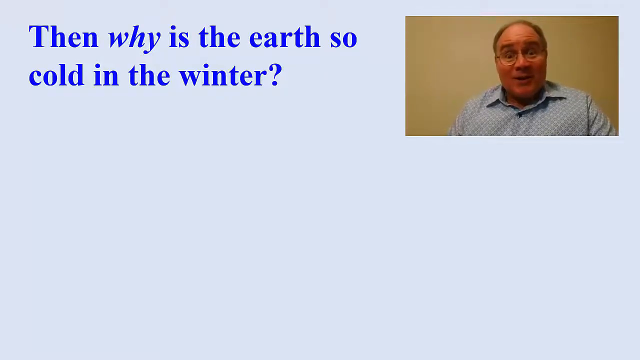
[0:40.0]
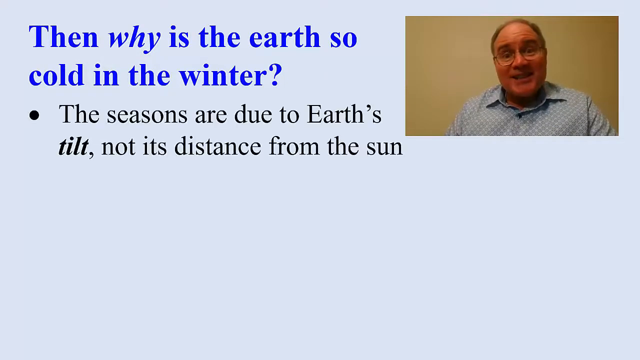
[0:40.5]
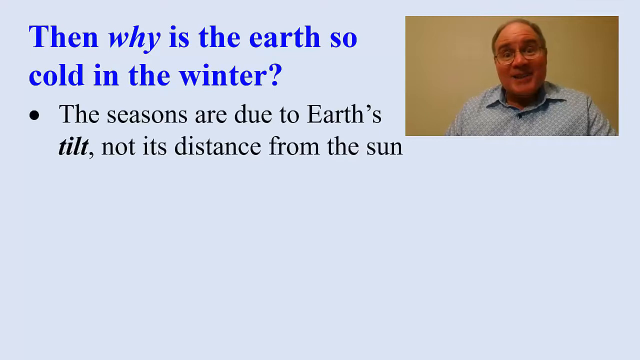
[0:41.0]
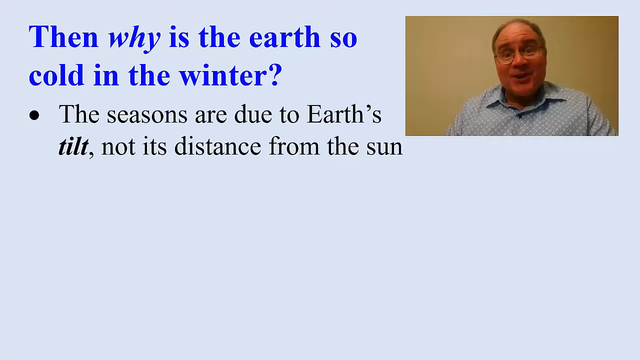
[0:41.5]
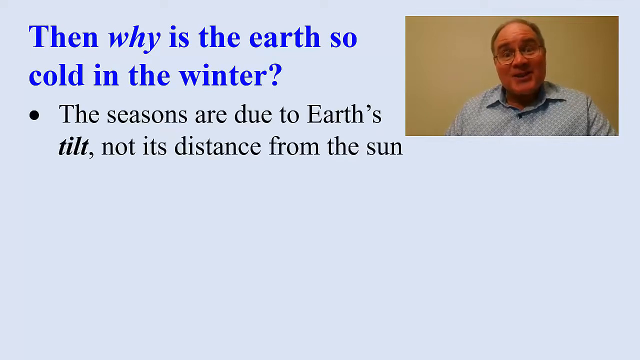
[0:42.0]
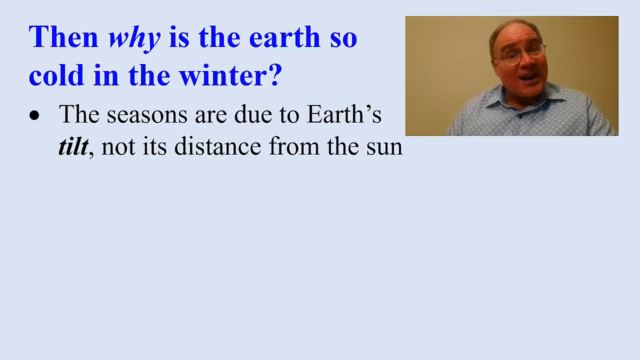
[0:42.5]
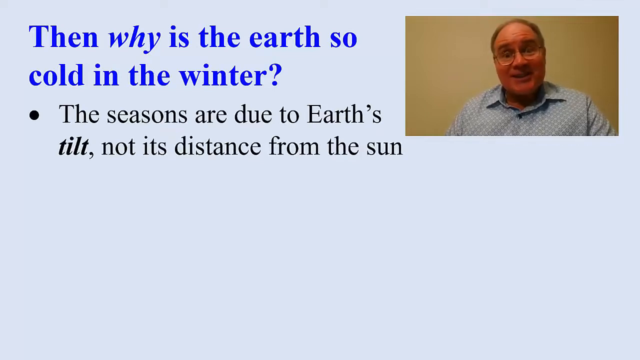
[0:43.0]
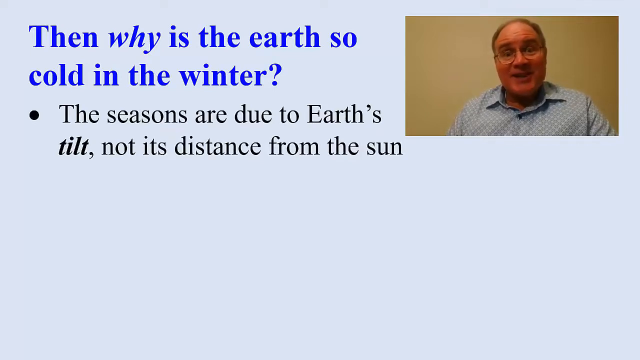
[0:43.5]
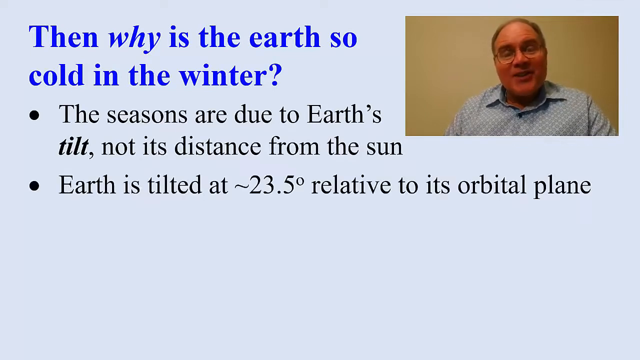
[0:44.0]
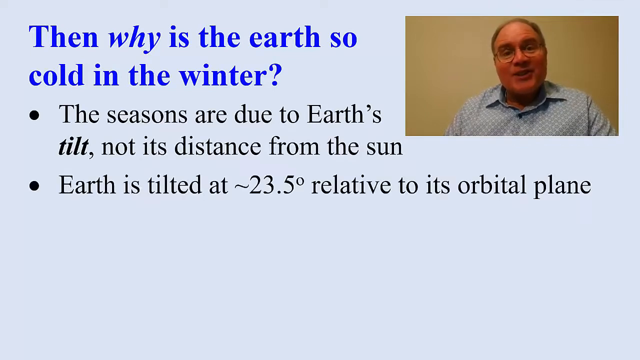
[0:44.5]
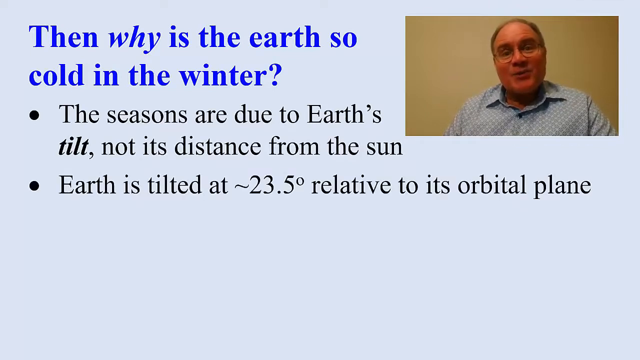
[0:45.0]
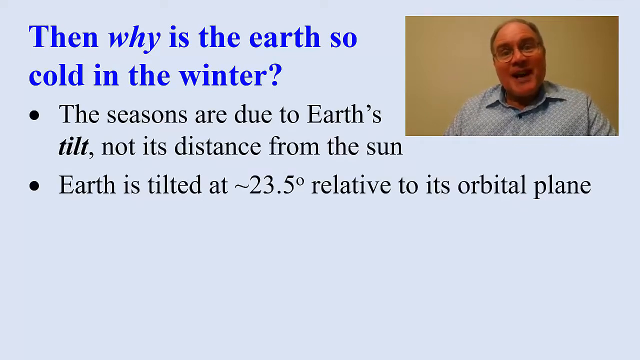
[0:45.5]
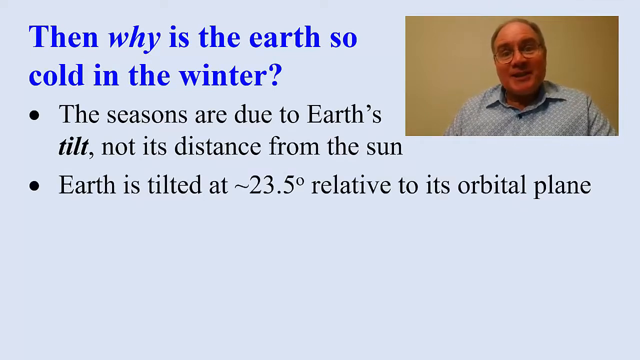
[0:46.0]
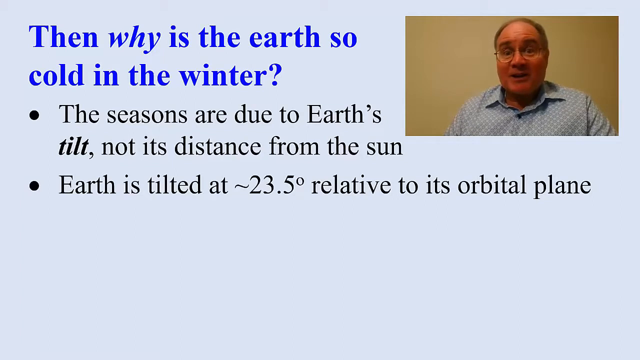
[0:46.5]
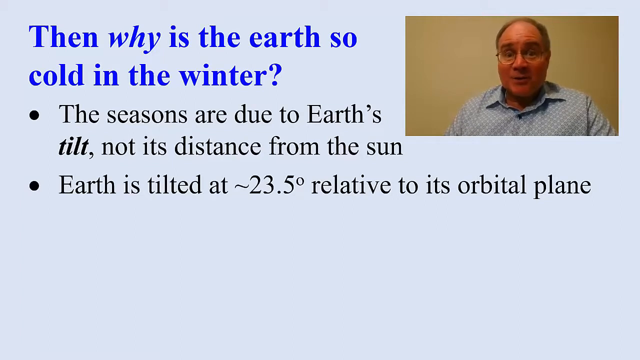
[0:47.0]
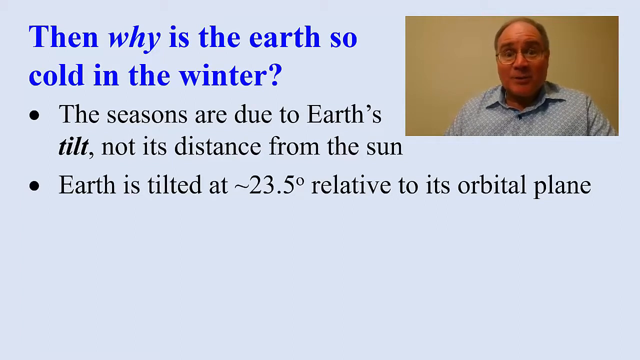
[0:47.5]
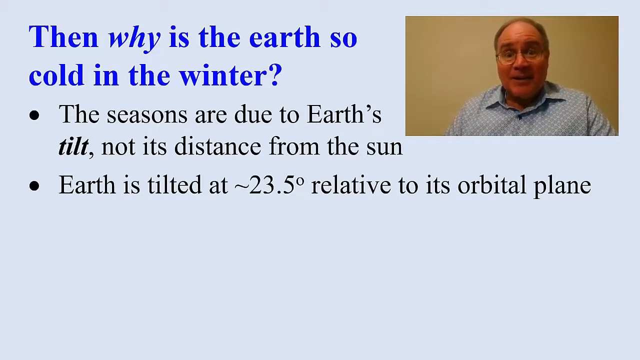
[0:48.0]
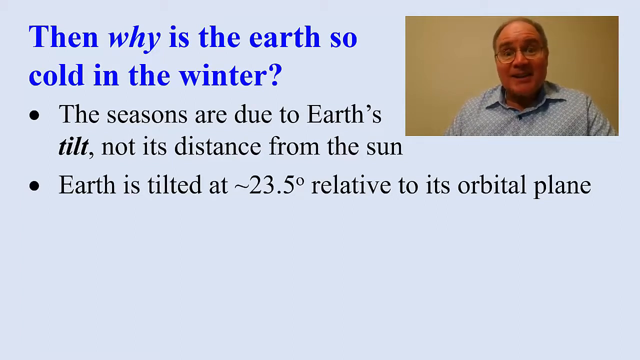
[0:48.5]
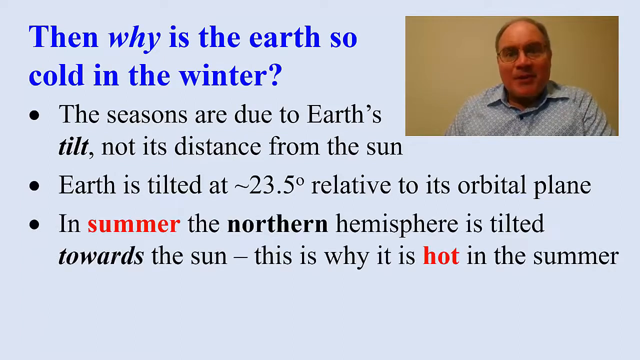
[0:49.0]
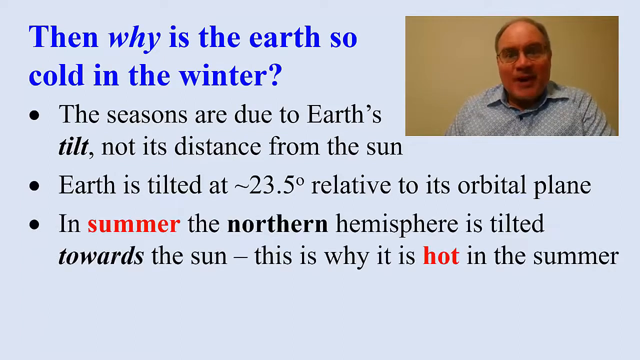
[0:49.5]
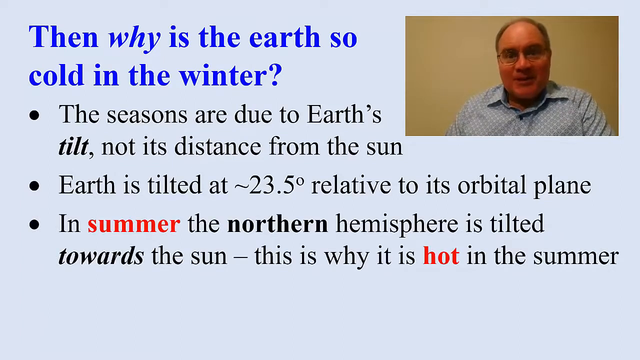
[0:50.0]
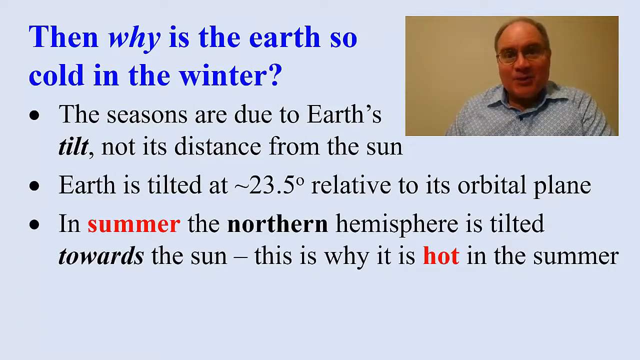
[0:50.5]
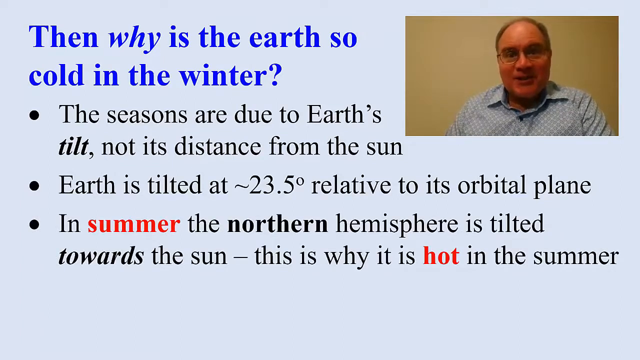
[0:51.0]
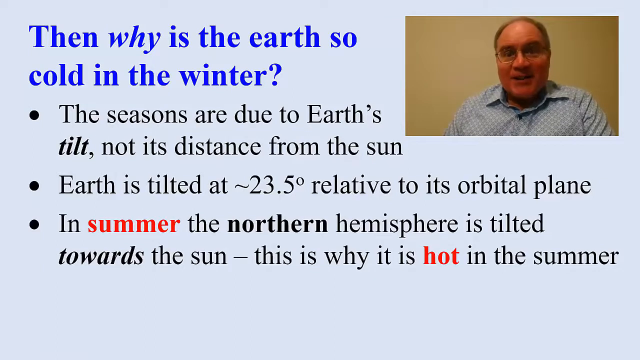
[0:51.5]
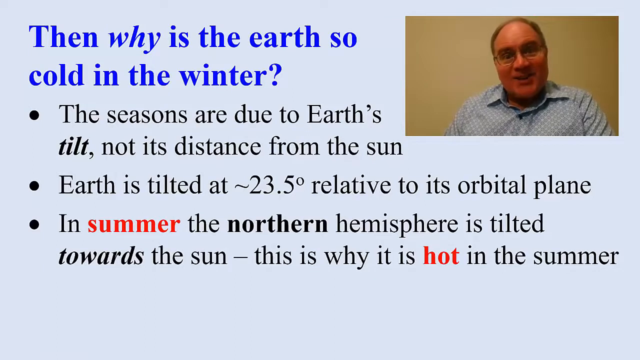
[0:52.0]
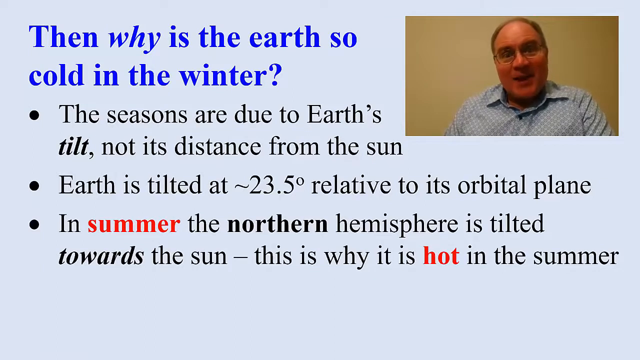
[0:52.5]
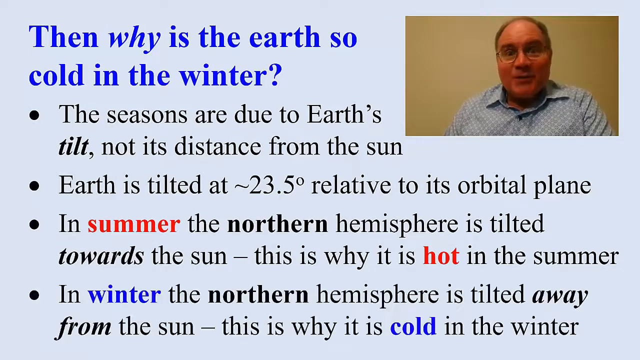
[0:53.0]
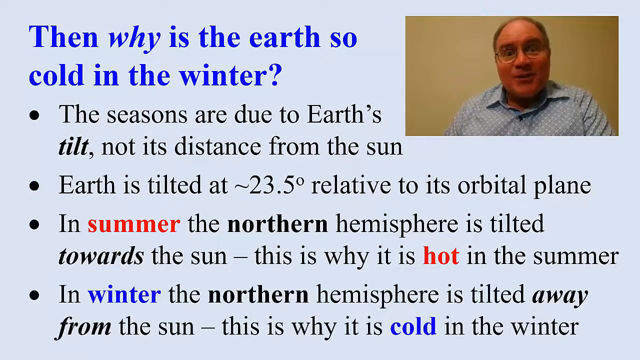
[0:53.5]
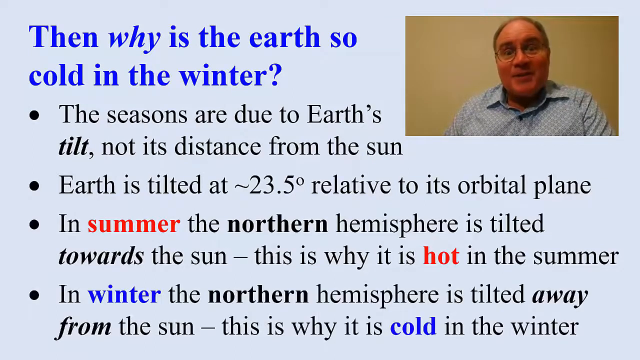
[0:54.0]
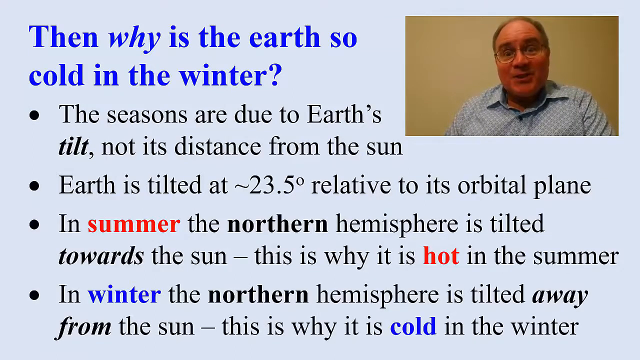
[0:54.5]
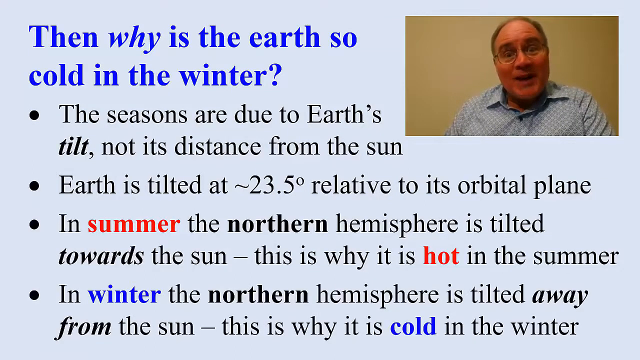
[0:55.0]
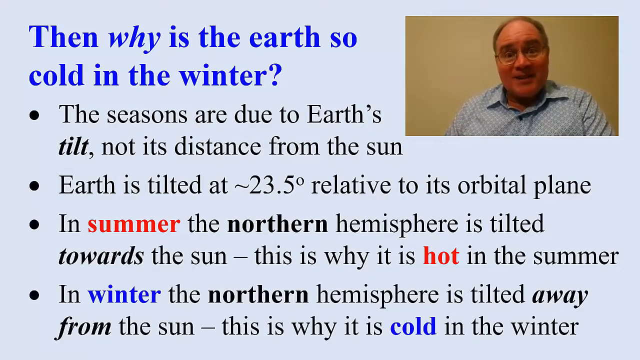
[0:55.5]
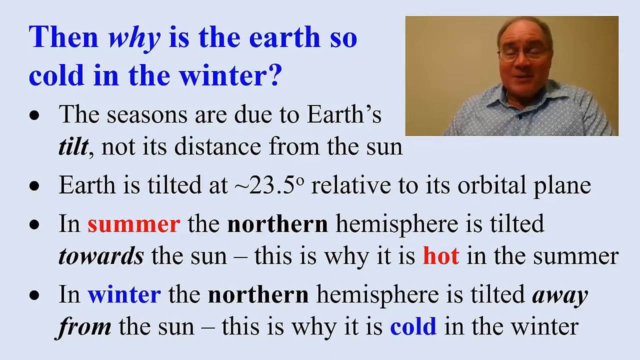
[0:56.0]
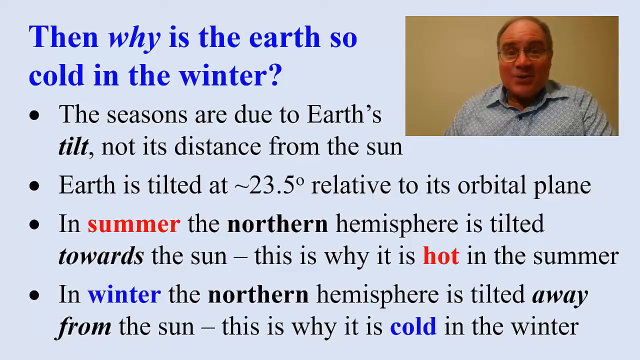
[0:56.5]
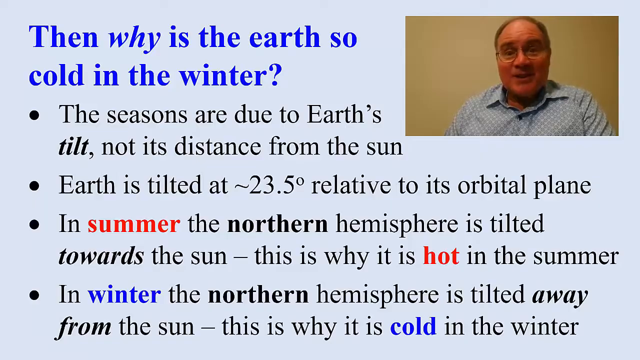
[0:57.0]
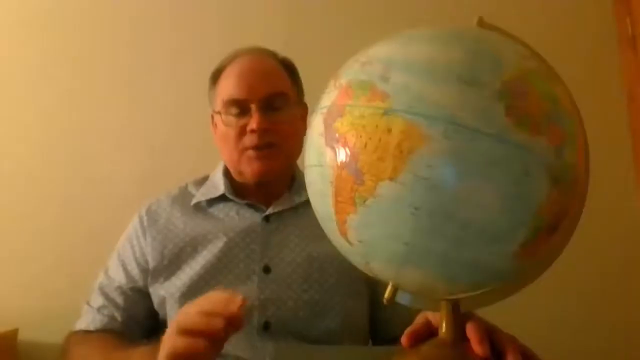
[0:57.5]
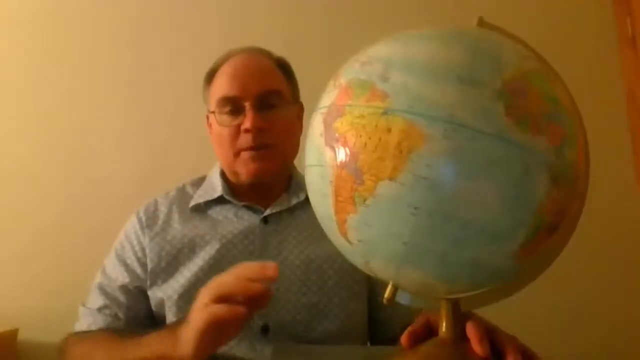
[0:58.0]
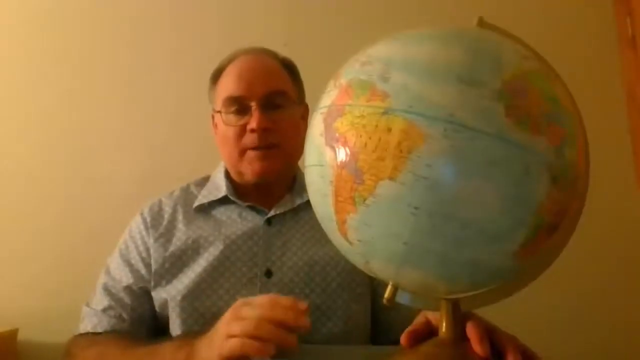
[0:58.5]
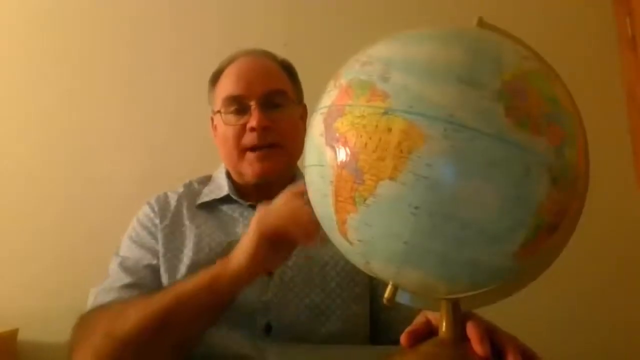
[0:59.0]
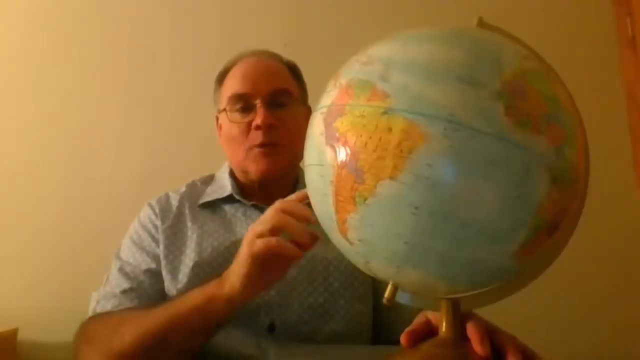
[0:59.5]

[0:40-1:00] John talks in the upper right corner, smiling and turning his head slightly to the left. Additional words come onto the screen towards the left side: "why is the Earth so cold in the winter", written in blue. Beneath it appear "the seasons are due to Earth's tilt, not its distance from the sun", then "Earth is tilted at 23.5 degrees relative to its orbital plane", then "in summer, the northern hemisphere is tilted towards the sun. This is why it is hot in the summer." The text is on a powder blue background with a gradient that fades into gray and black towards the bottom. Next appears "in winter, the northern hemisphere is tilted away from the sun, this is why it is cold in the winter." John keeps talking in the upper right corner until the scene changes to John back in the room where he was sitting previously, with the wall visible behind him and a globe on the right side of the frame. Relative to John, the globe appears very large.